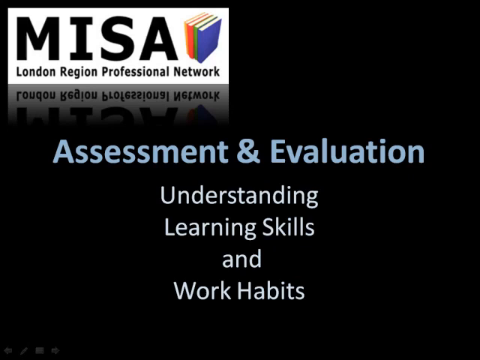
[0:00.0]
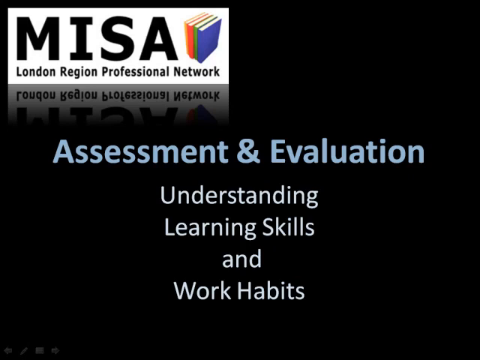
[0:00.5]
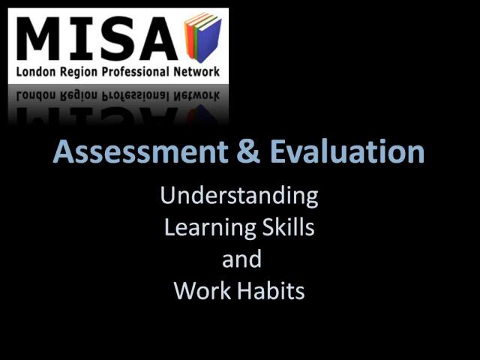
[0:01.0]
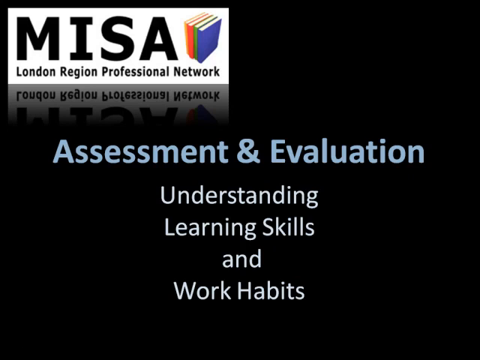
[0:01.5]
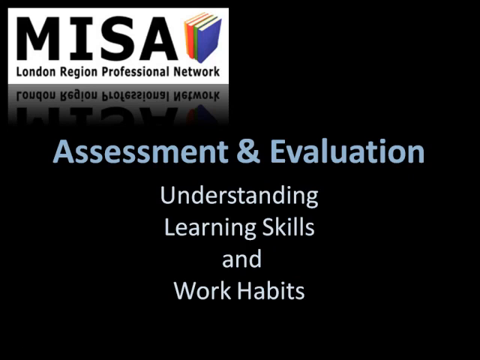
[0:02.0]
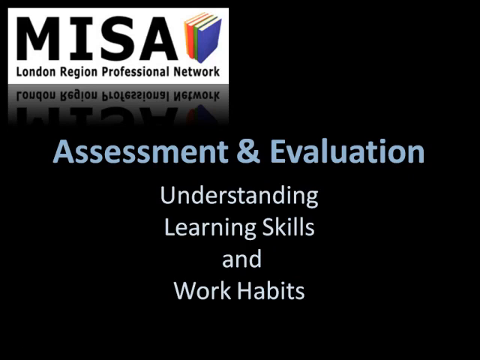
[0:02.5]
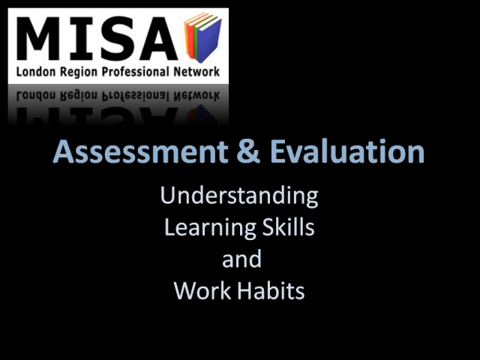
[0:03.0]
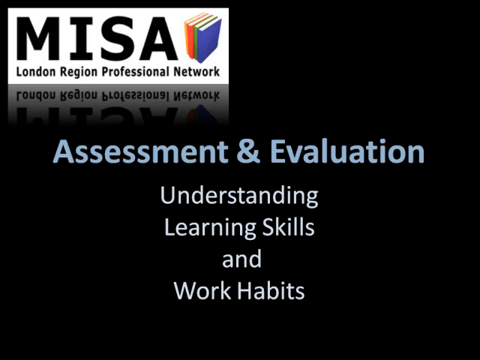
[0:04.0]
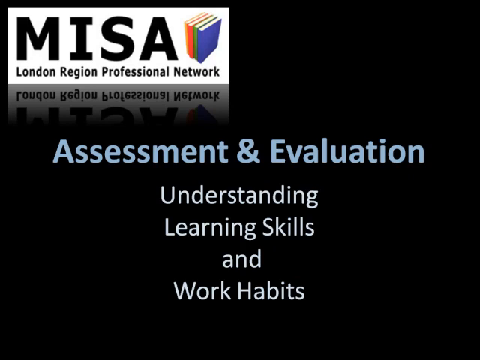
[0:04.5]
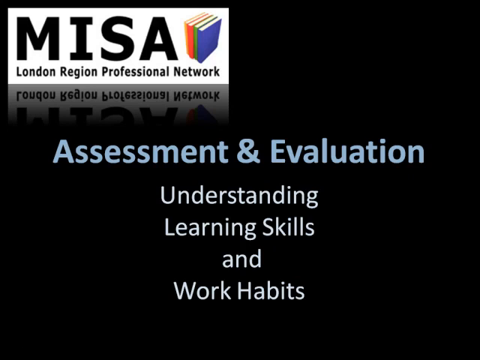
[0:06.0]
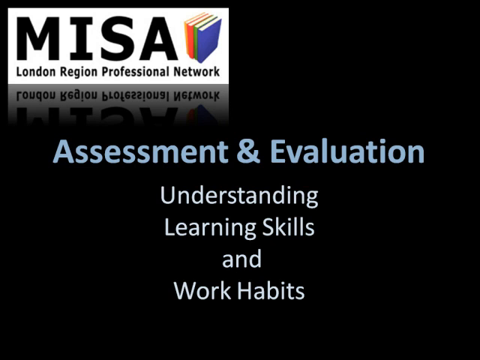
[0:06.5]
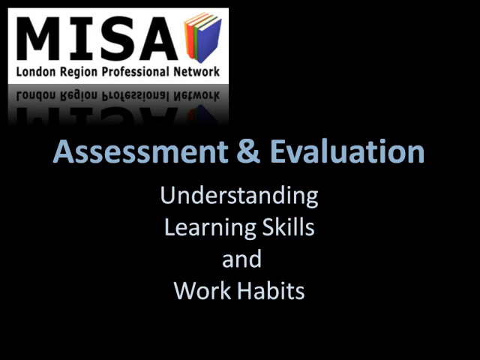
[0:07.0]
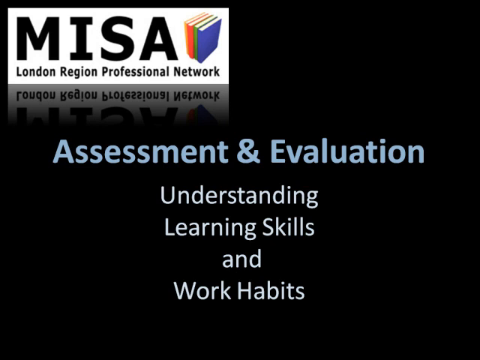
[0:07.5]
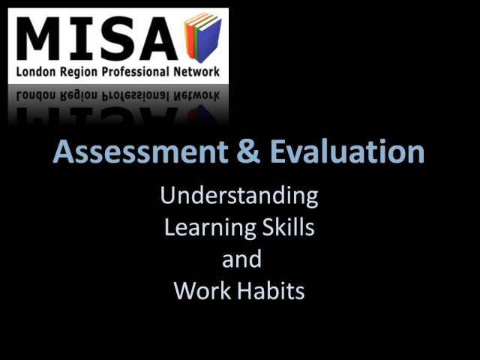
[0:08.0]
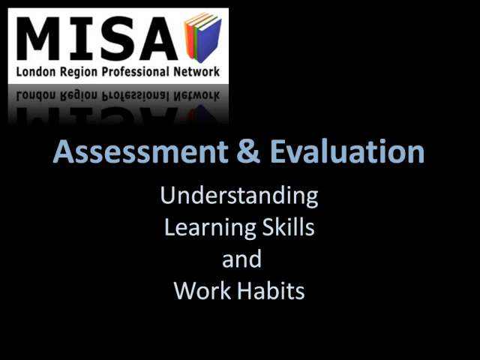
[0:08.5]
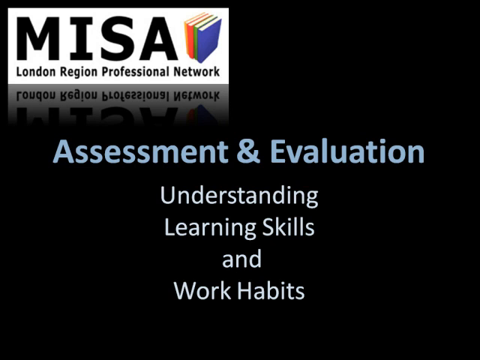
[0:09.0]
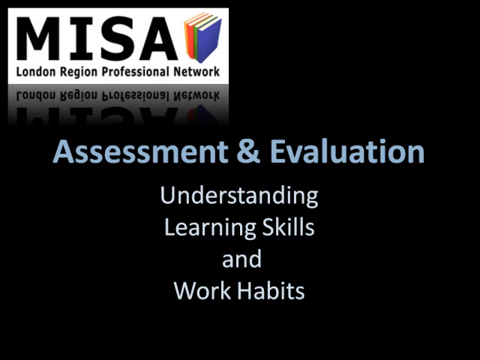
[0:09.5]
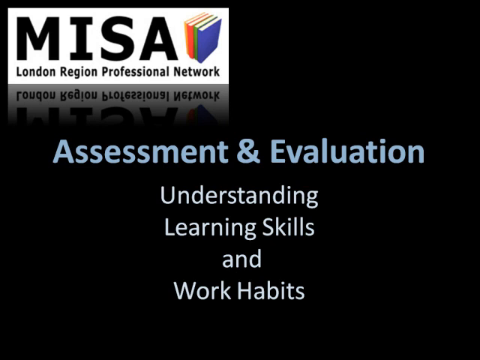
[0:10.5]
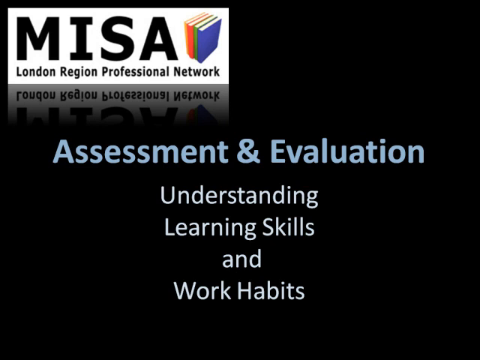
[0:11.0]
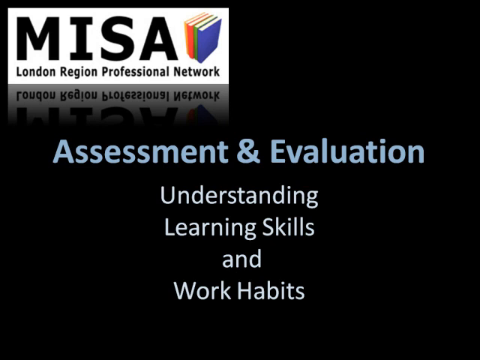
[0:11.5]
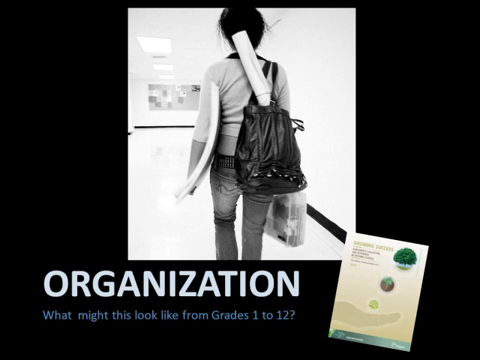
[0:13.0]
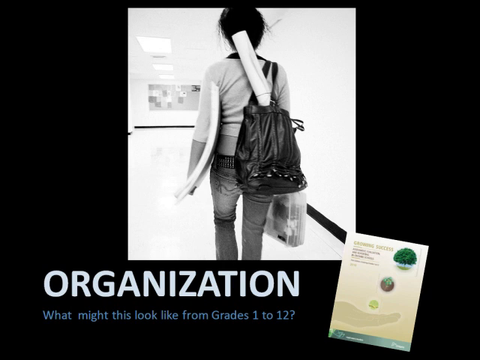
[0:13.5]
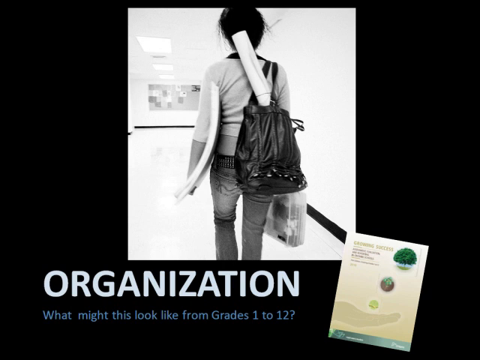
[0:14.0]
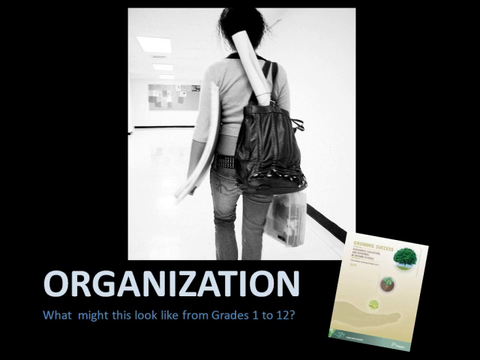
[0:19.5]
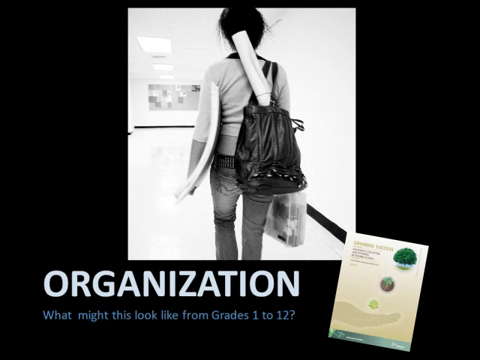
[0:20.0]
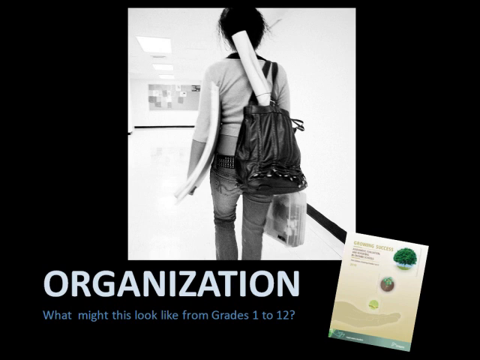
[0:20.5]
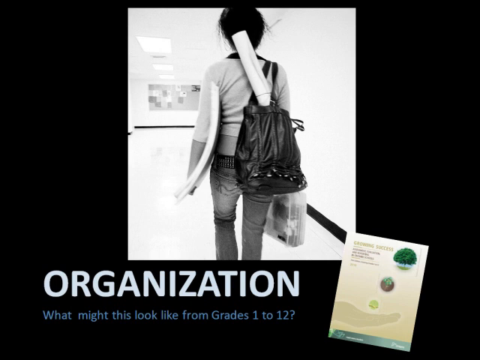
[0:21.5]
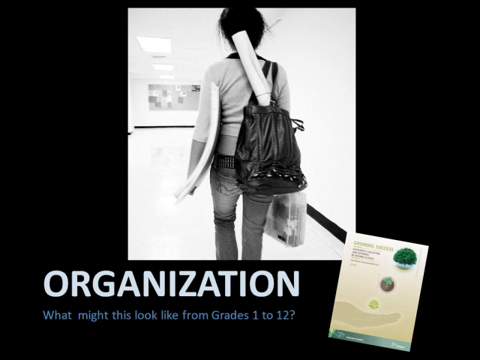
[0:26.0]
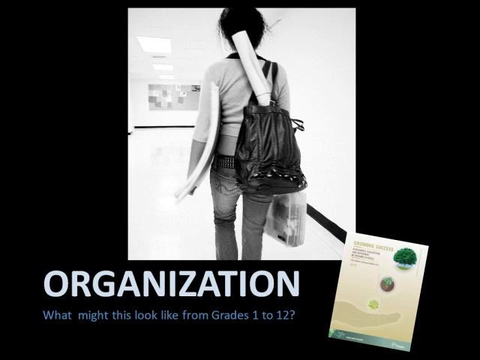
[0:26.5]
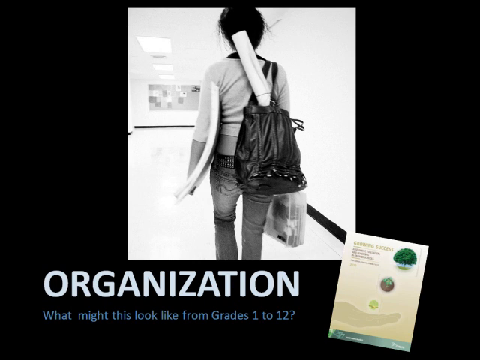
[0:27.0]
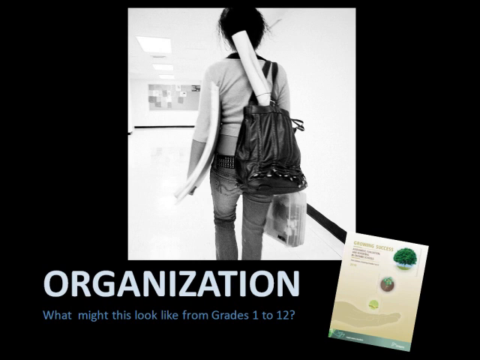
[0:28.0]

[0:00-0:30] The video opens on a black background. In the top left there is a white rectangle with big bold black letters, "M-I-S-A", and multicolored books to the right of it. Underneath, it says "London Region Professional Network", and there is a mirror effect, an opposite mirror reflection, below it. In the middle of the screen, blue text reads "assessment and evaluation, understanding learning skills and work habits". The scene changes to a black-and-white picture of a young female seen from the back in a school hallway. She carries a backpack with a large round object poking out of the top all the way to her head, a clear briefcase, and large pieces of white cardboard under her left arm. Text below says "organization, what might this look like from grades 1 through 12", and at the bottom right there is a picture of a piece of paper with a green tree at the top and other pictures following.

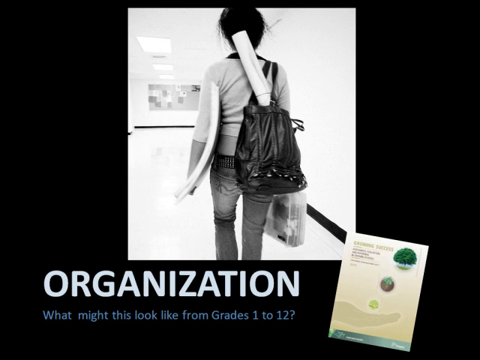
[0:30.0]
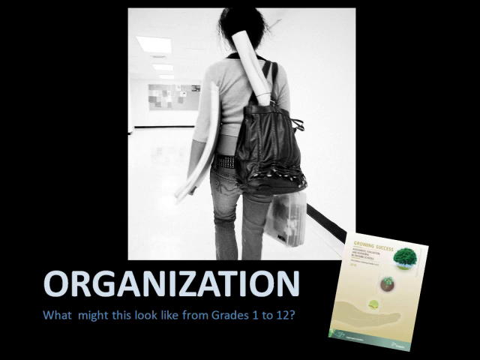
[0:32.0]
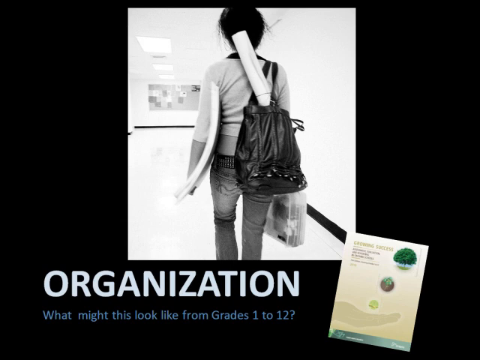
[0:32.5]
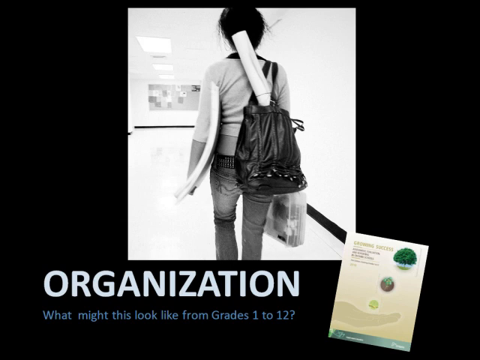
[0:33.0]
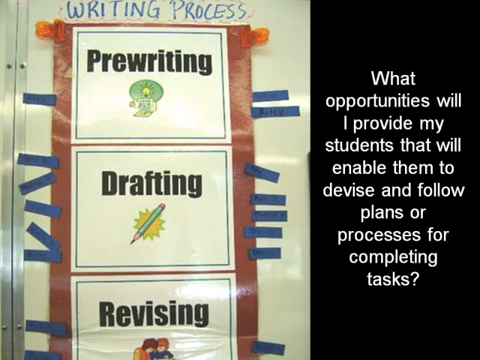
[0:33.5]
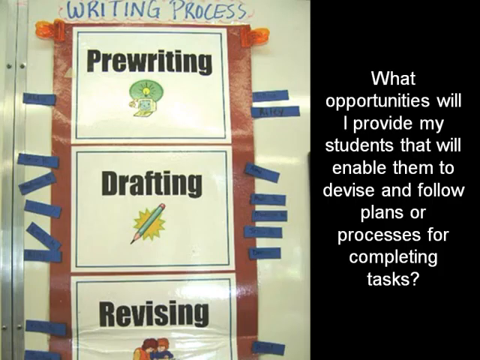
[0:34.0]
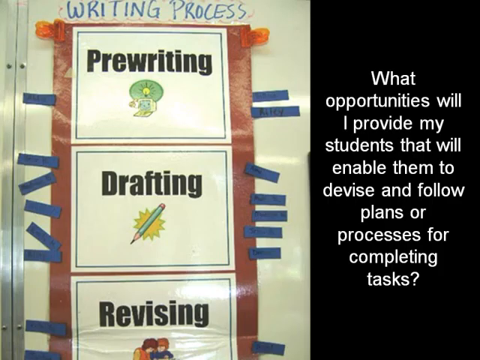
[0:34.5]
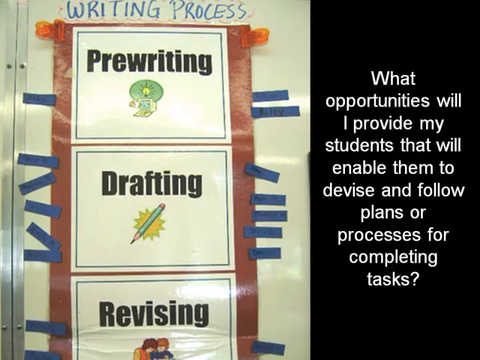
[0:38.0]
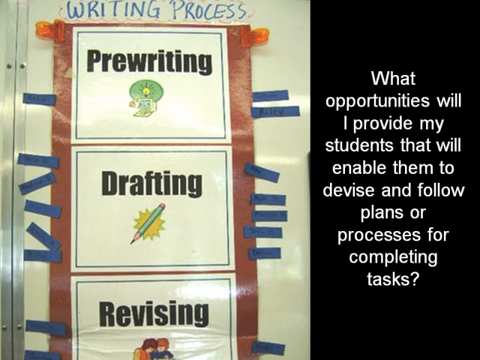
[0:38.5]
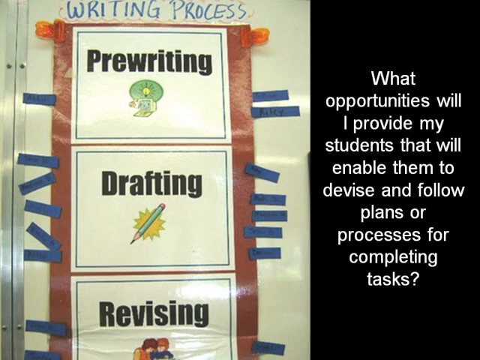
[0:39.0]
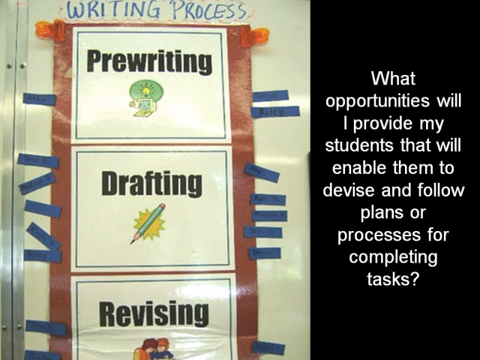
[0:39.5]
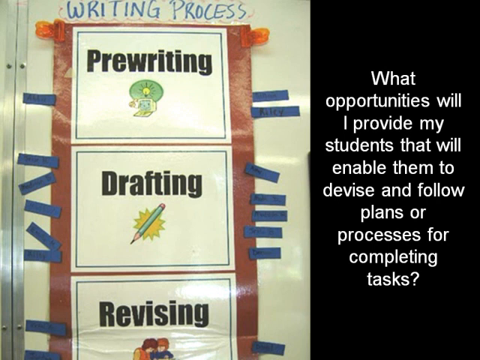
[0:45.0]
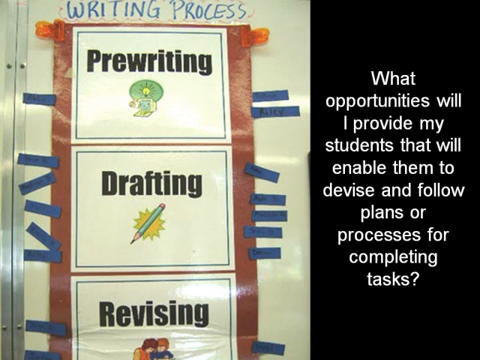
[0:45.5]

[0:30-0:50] Against a black background, a black-and-white photo shows a white female in the center wearing a midriff top and blue jeans. She carries white cardboard sheets under her left arm and a clear briefcase in her right hand as she walks away from the camera down a classroom hall. At the end of the hall there is a bulletin board with many things posted on it. To the right of the screen there is a letter with a green tree, and underneath it says "organization, what might this look like from grades one to two". The slide then changes. On the left is a picture headed "the writing process" with square cards: the top one says "prewriting" with a light bulb on a green background, the next says "drafting" with a pencil and a yellow star in the background, and the bottom one says "revising". On the right it says "what opportunities will I provide my students that will enable them to devise and follow plans or processes for completing tasks".